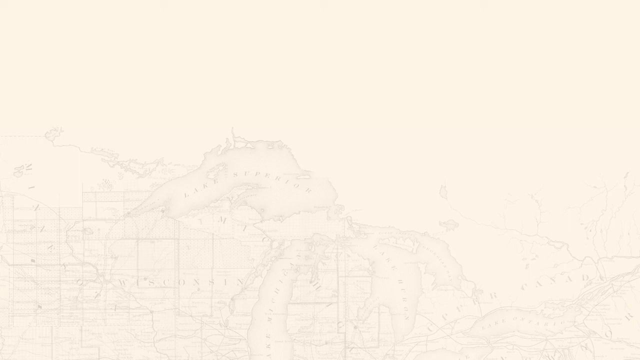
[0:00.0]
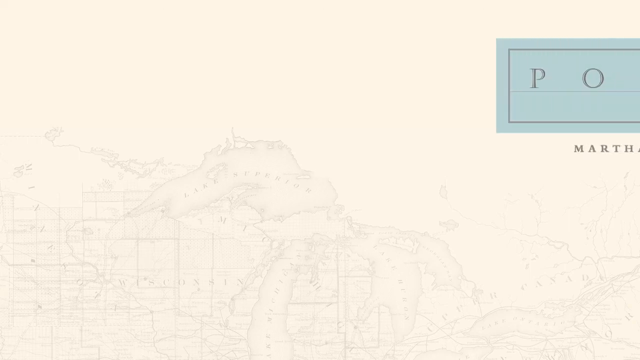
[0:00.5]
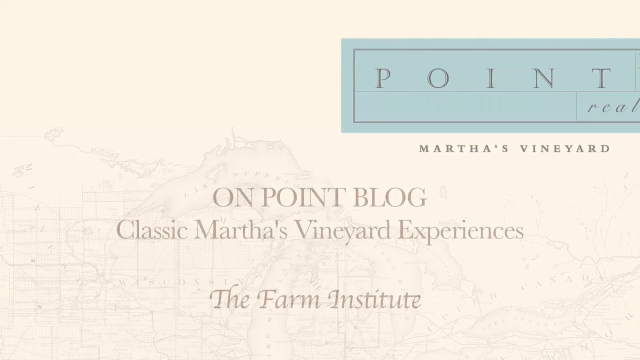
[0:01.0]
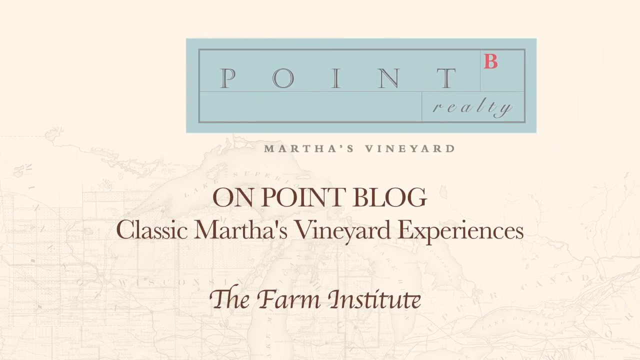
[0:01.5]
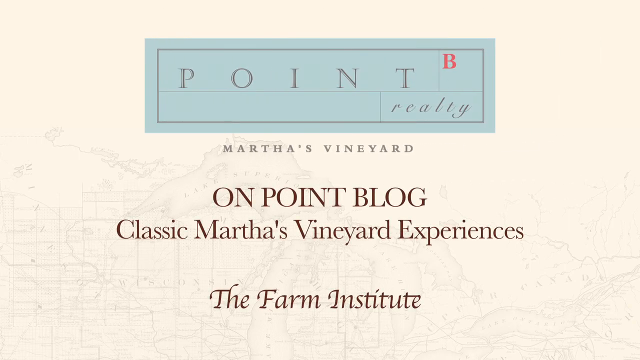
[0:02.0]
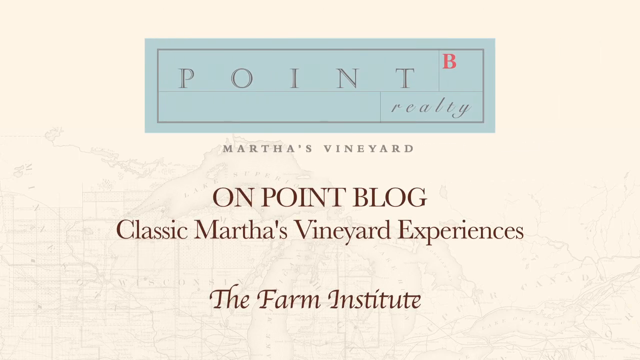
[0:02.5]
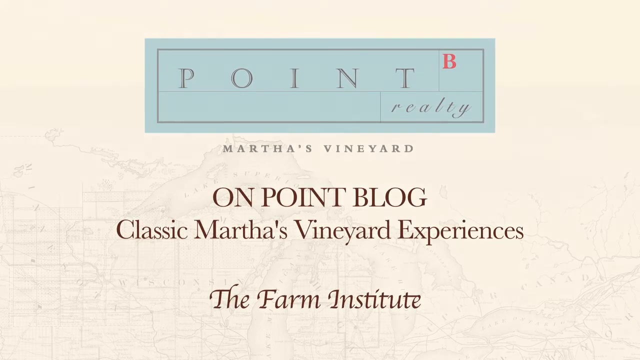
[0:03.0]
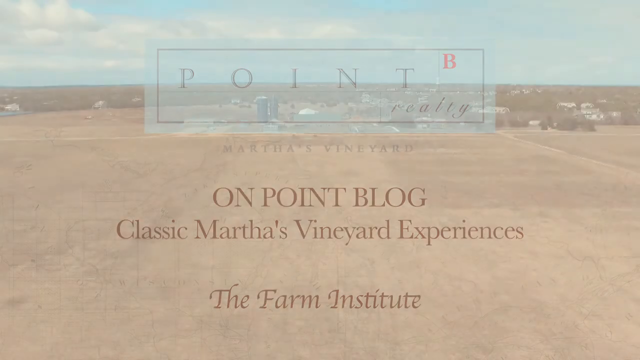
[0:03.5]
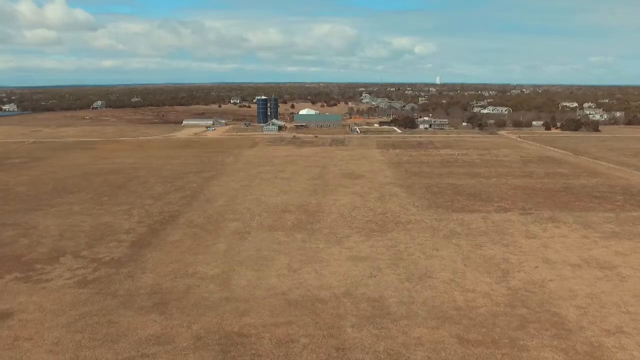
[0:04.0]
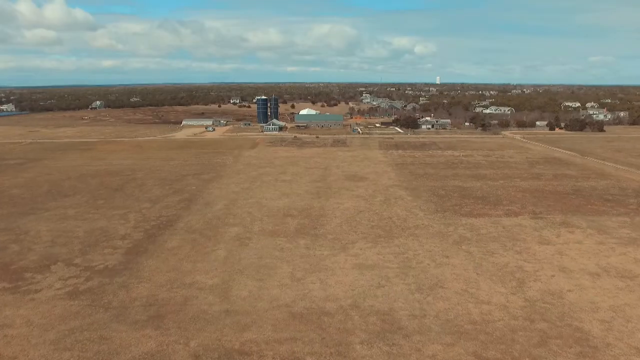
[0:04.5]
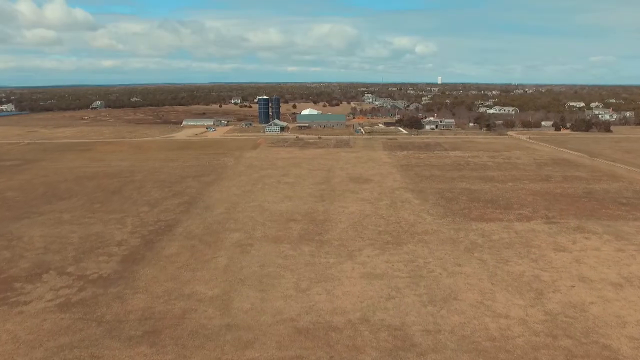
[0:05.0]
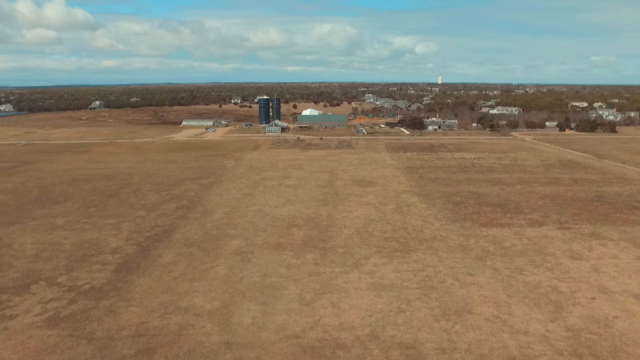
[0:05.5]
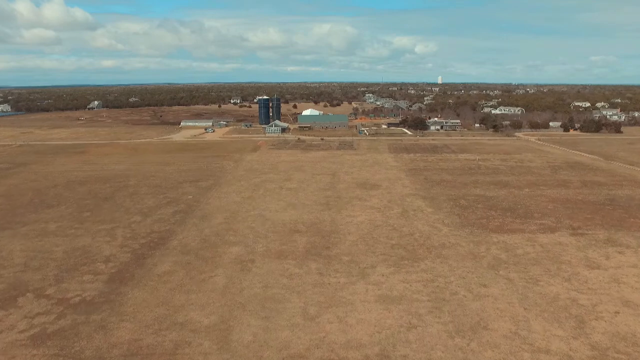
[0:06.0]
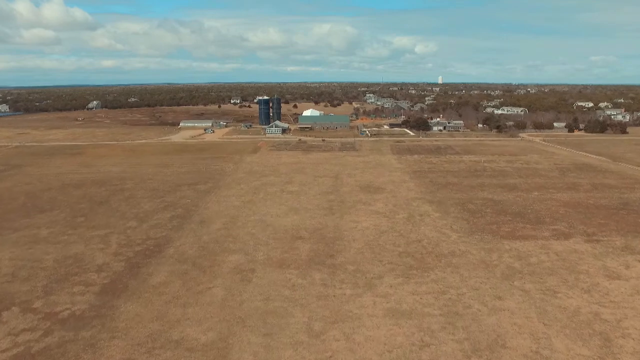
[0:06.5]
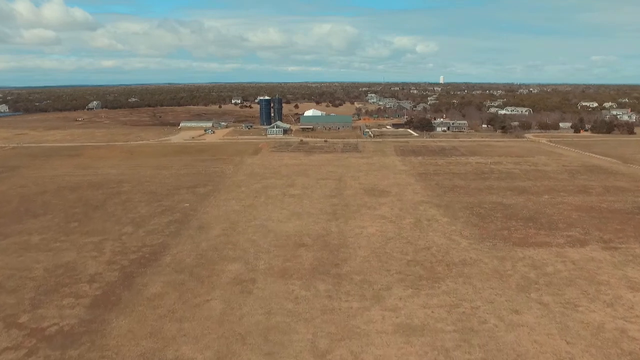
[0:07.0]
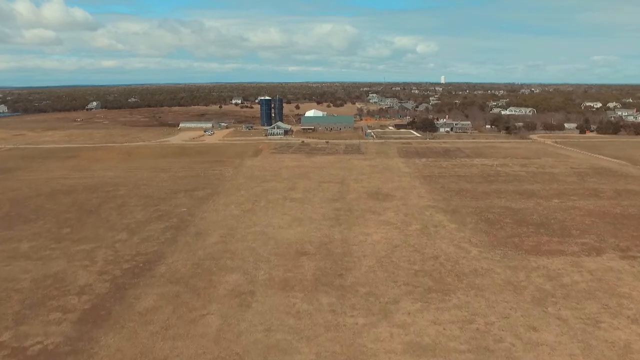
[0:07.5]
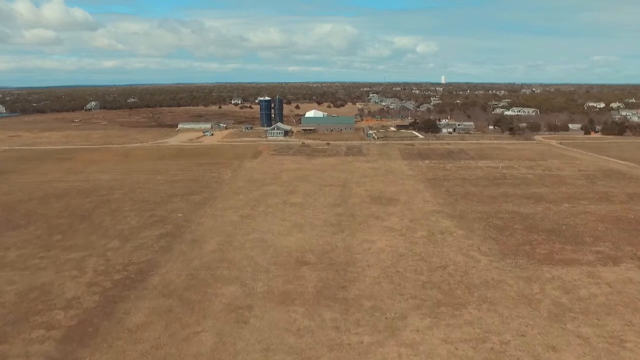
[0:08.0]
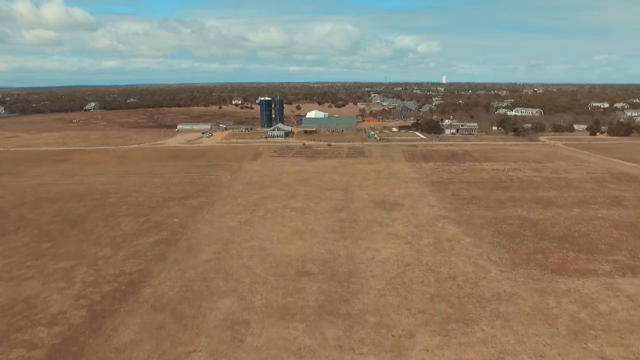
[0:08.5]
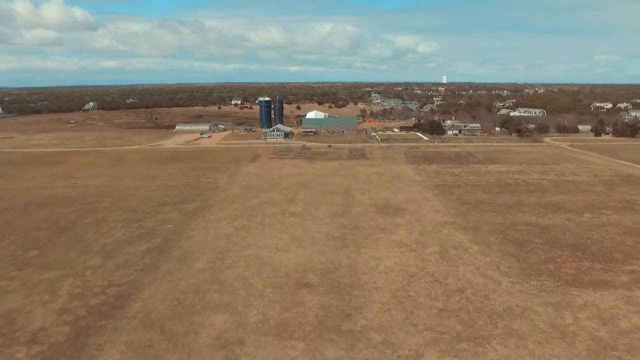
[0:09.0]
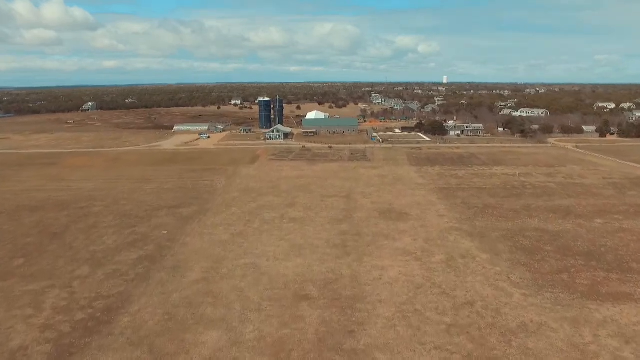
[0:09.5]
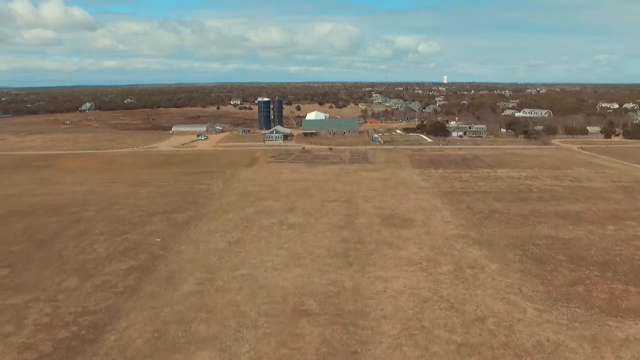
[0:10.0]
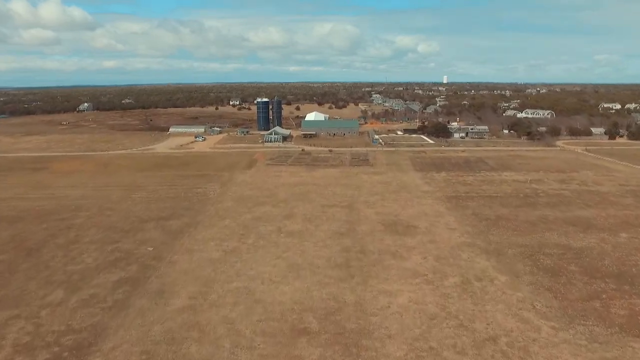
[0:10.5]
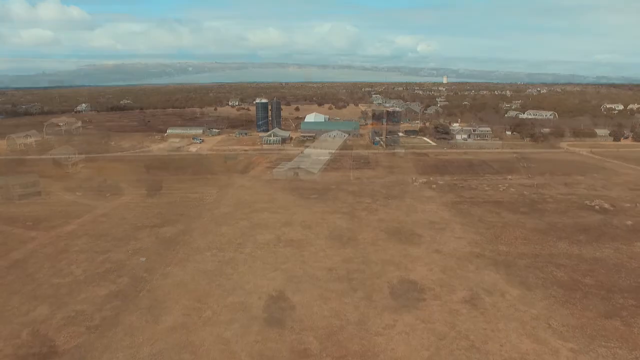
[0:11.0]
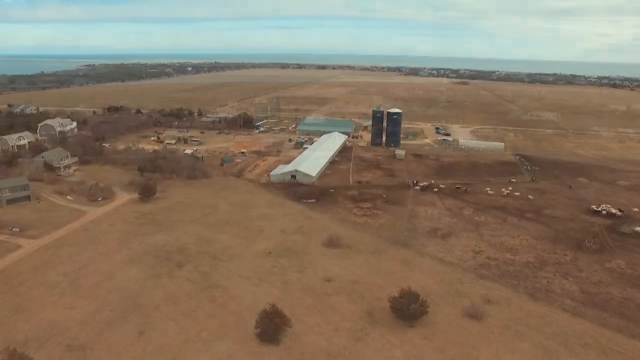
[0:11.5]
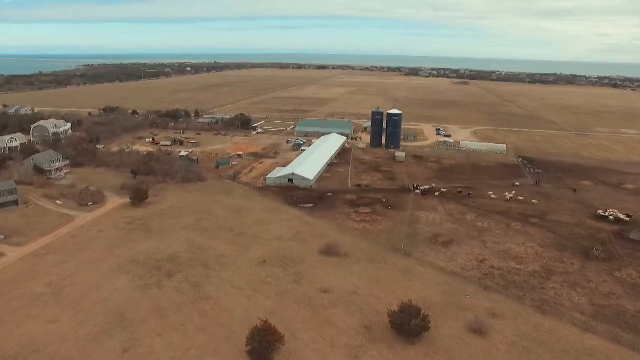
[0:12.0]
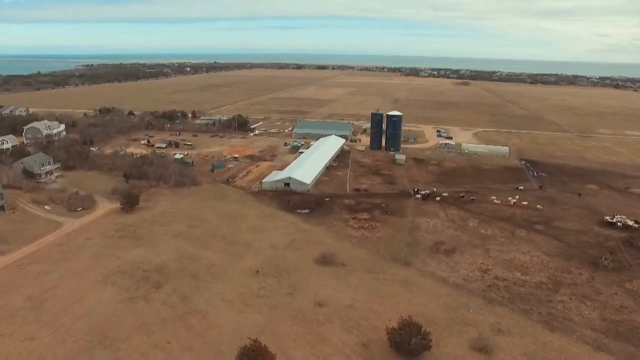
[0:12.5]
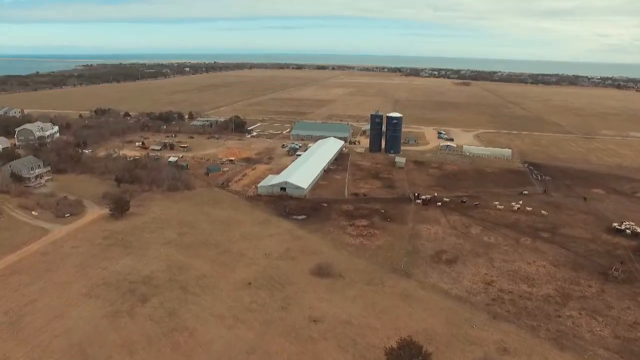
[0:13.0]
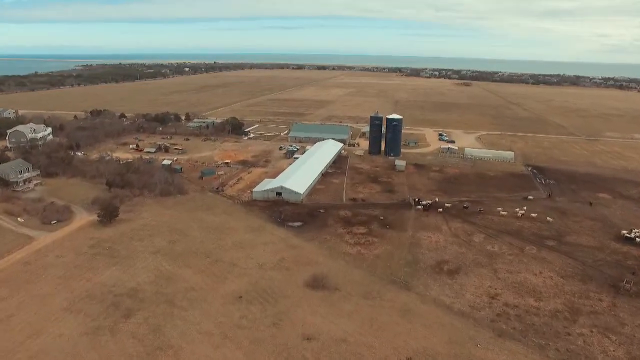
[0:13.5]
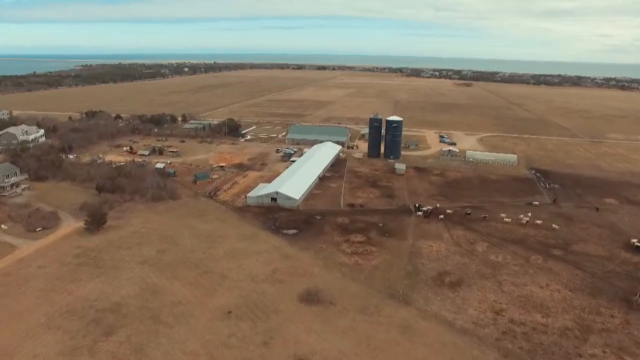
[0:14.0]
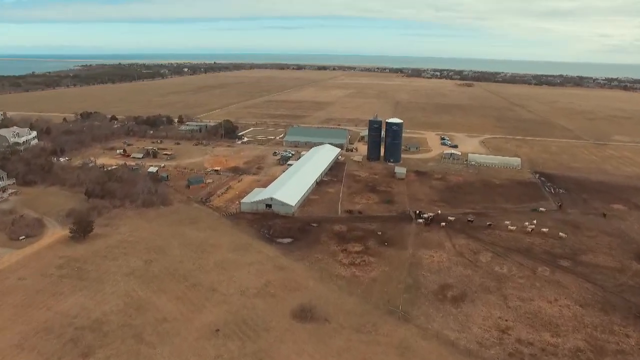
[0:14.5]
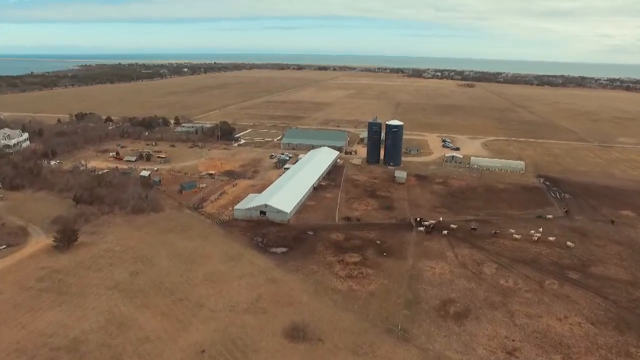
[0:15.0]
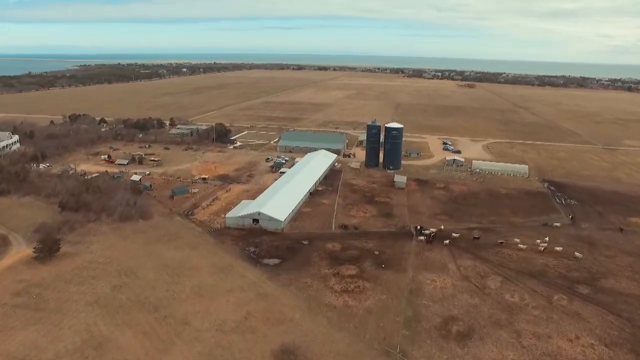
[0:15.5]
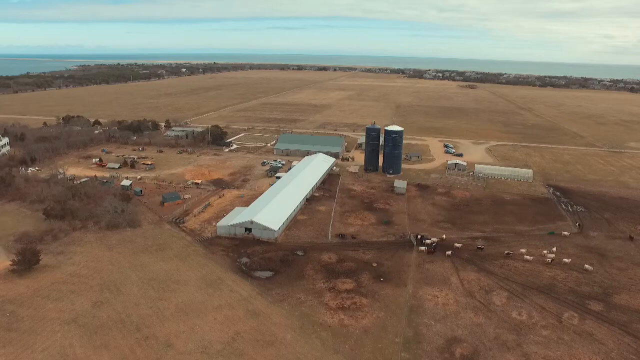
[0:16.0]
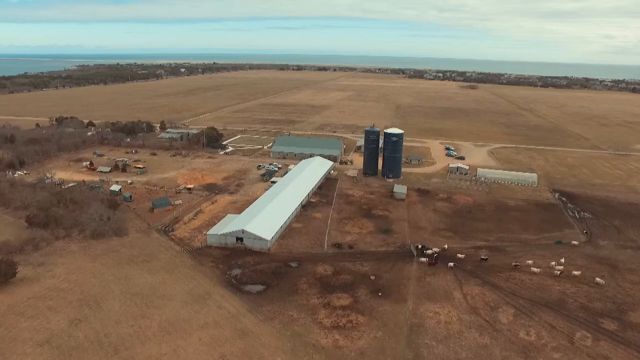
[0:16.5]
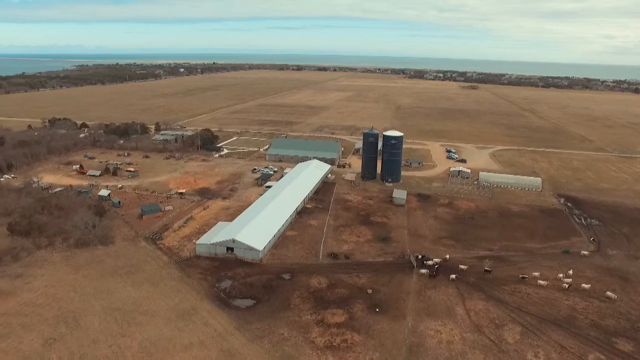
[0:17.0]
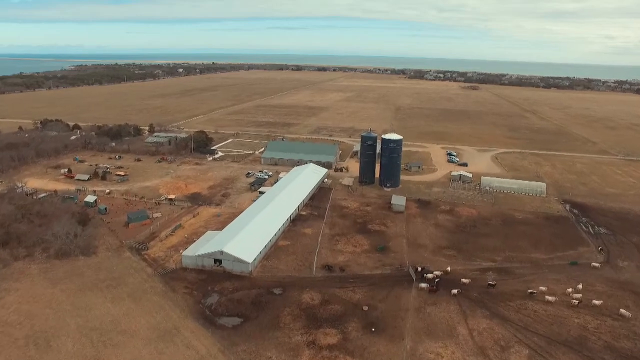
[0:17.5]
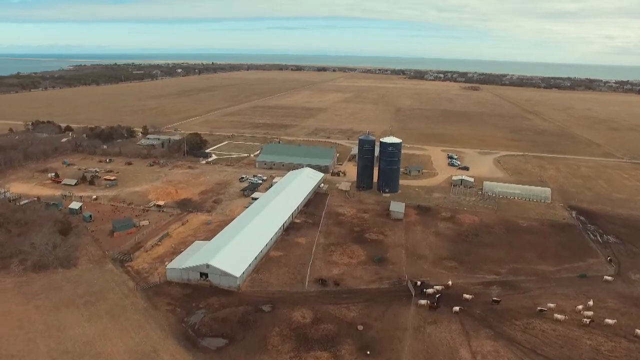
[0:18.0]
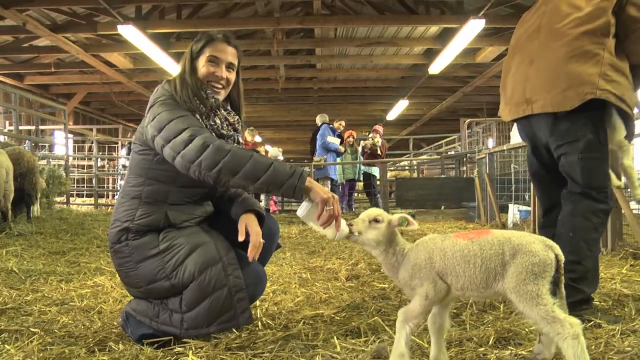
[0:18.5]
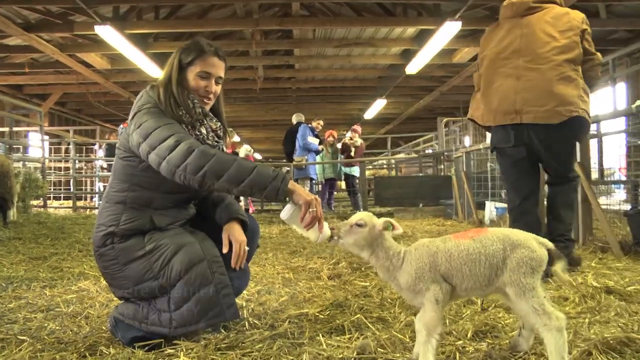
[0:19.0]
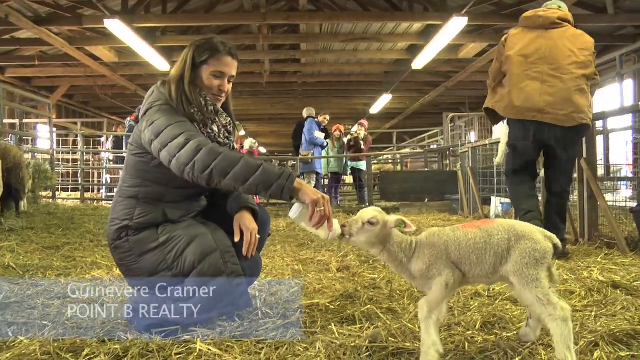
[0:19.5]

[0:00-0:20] The video opens on a pale pink screen with a map showing very faintly in the background. A pale blue box appears with the words "Point Reality" and a red B in the top right-hand corner of the box. Underneath it reads "Martha's Vineyard. On Point Blog, Classic Martha's Vineyard Experiences, The Farm Institute". An overhead shot of a farm follows, with an expanse of ground in the foreground that looks rather brown and dry. A building appears with other buildings in the background, and in the centre is a grey outbuilding with two black towers on its right-hand side. The sea is visible in the distance. The camera moves above the outbuilding, revealing some animals in the fields that look like cows. The scene then changes to the inside of a farm building, where a woman kneels, smiling at the camera and feeding a lamb with a bottle of milk. She talks to the camera; she is Guinevere Kramer from Point B Reality.